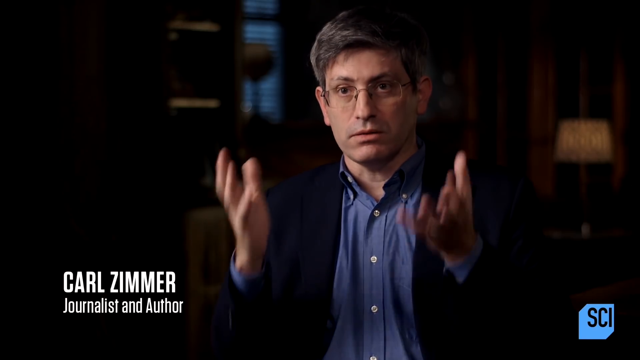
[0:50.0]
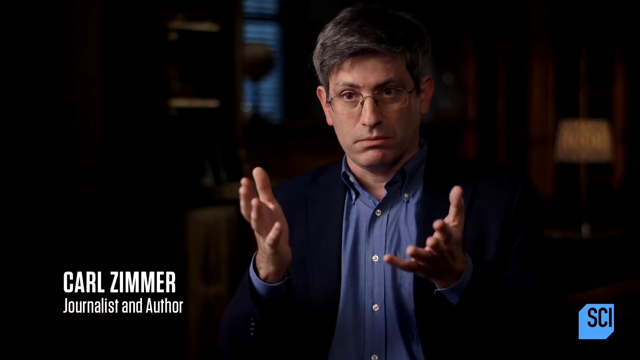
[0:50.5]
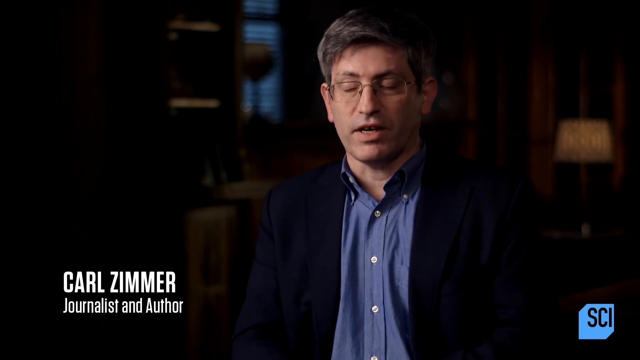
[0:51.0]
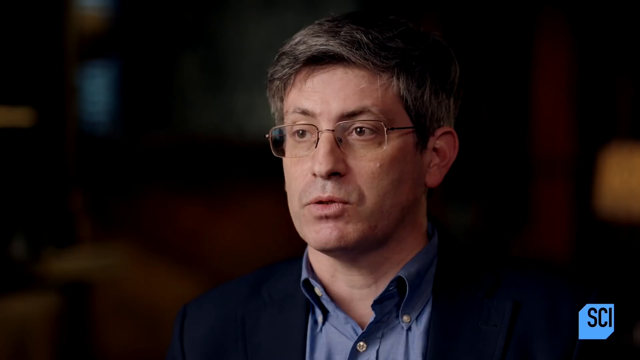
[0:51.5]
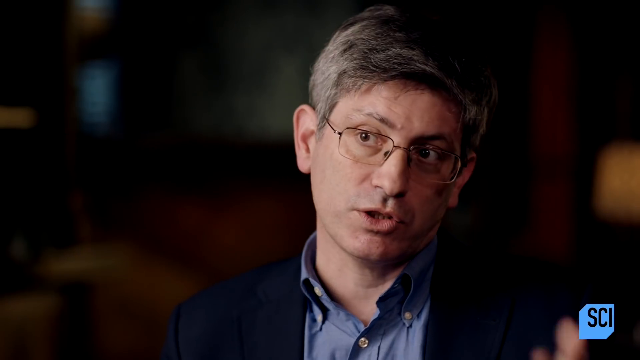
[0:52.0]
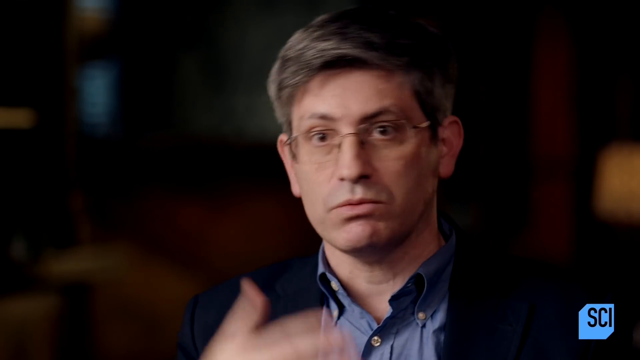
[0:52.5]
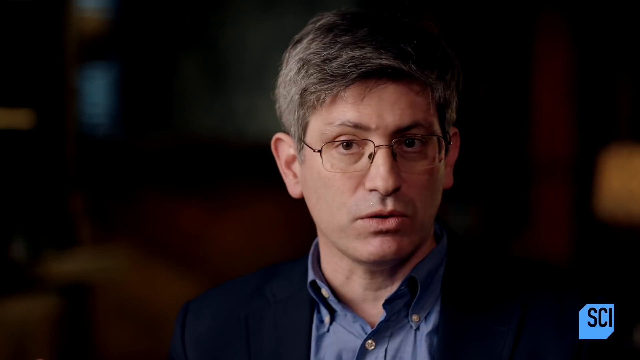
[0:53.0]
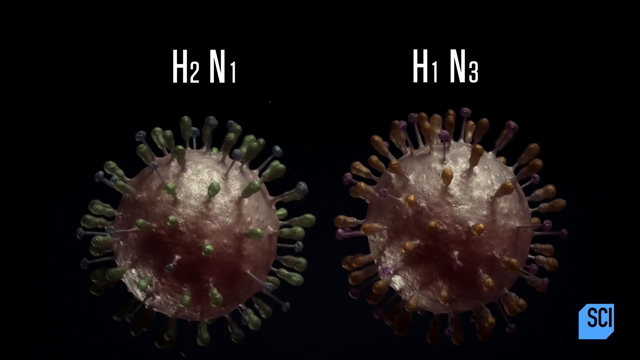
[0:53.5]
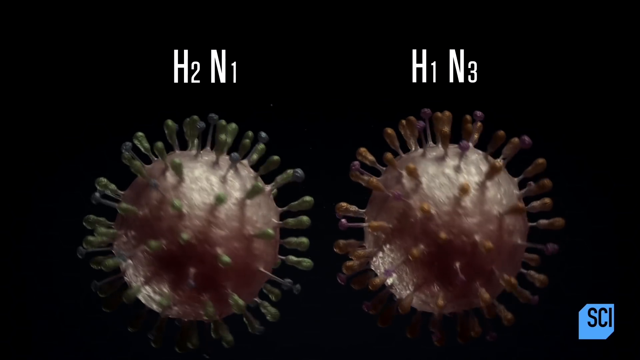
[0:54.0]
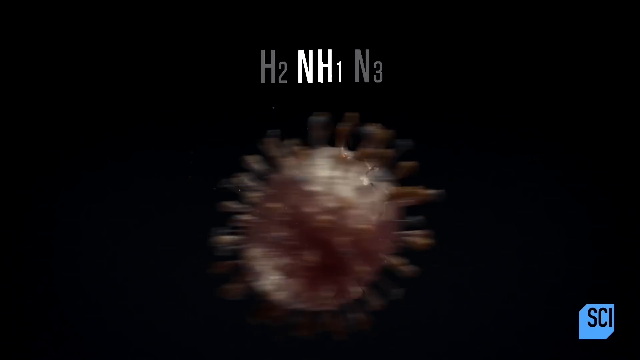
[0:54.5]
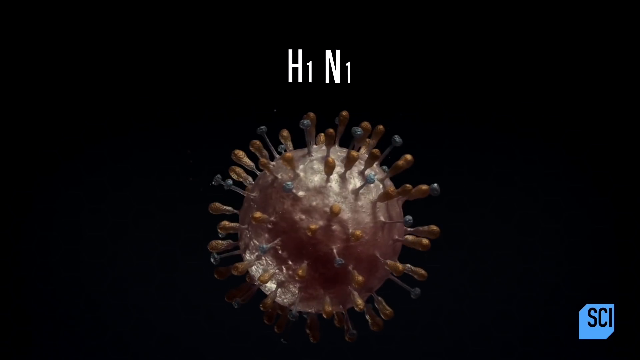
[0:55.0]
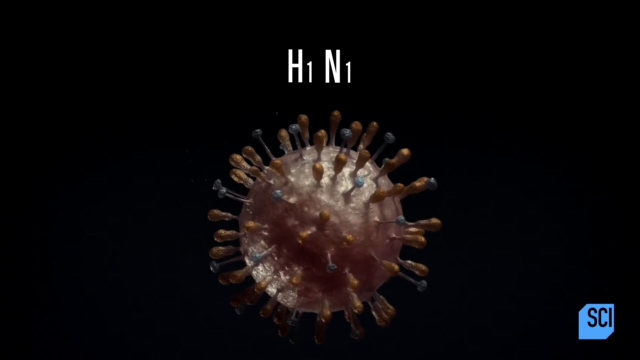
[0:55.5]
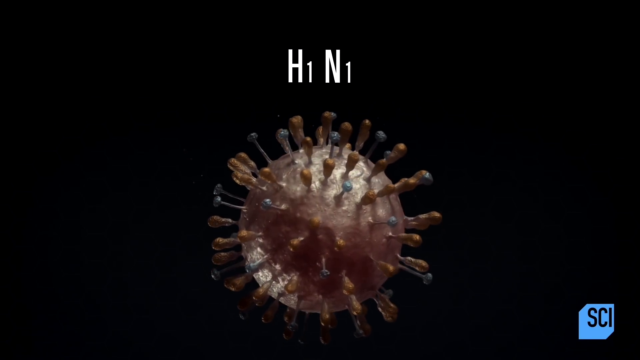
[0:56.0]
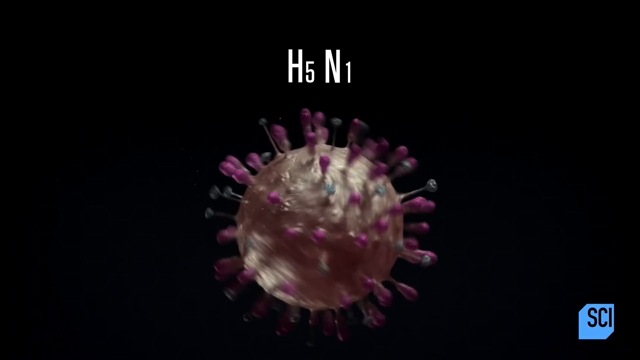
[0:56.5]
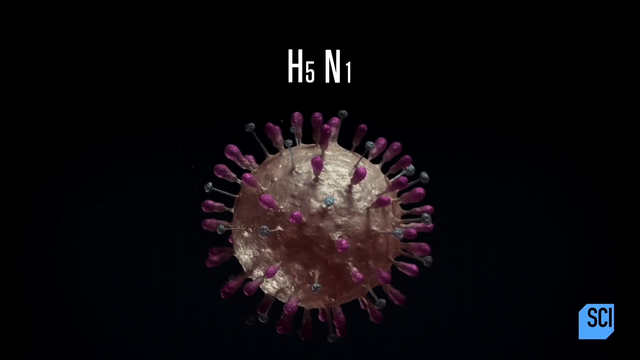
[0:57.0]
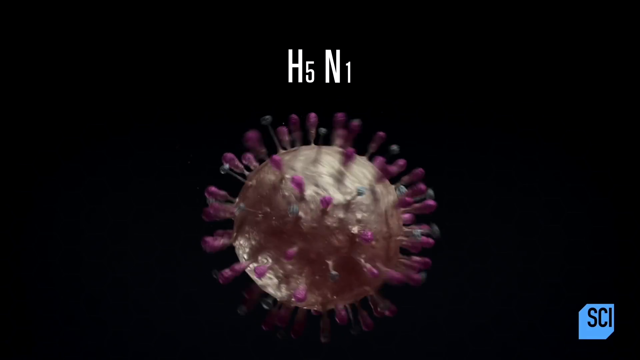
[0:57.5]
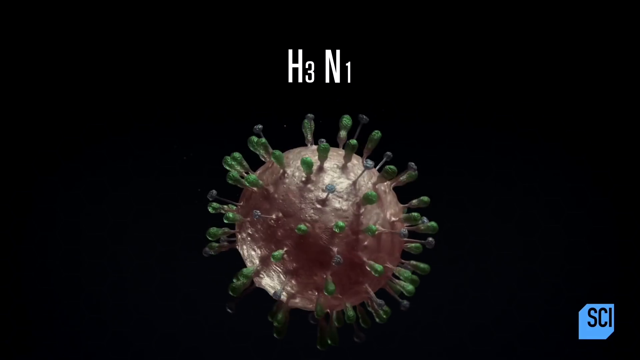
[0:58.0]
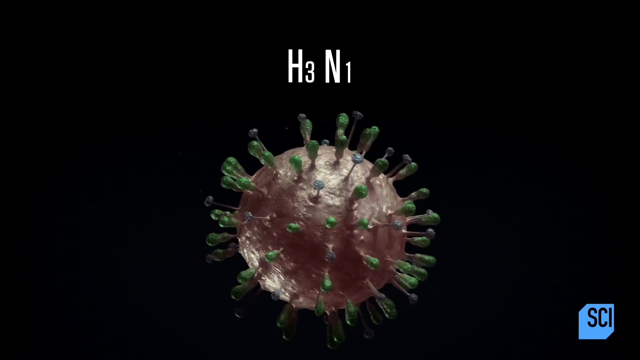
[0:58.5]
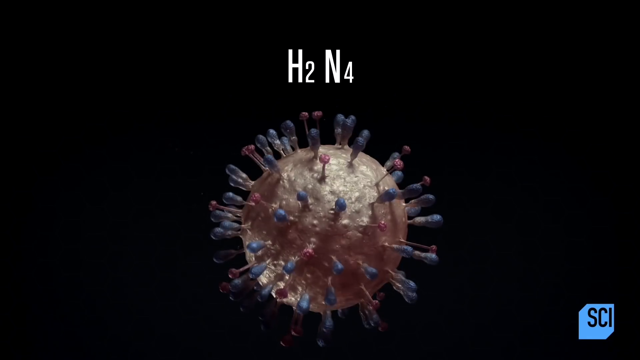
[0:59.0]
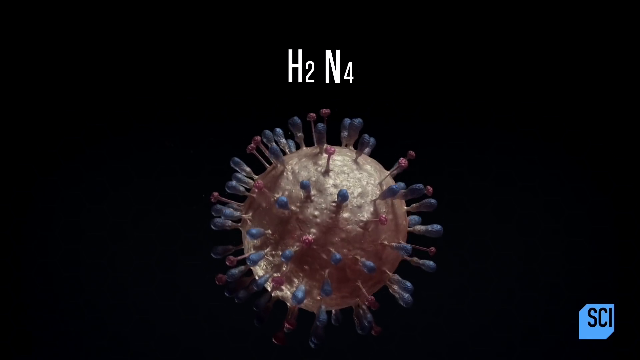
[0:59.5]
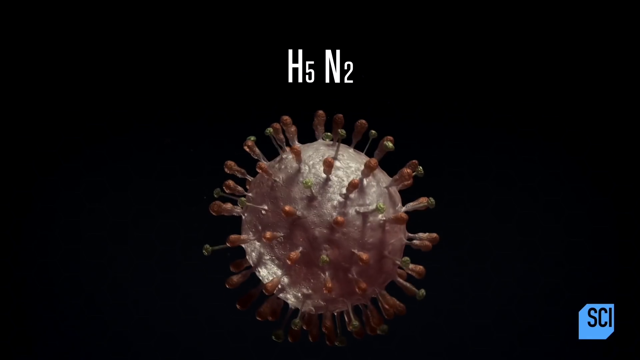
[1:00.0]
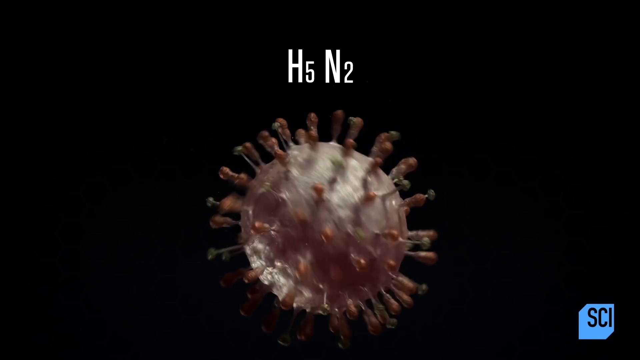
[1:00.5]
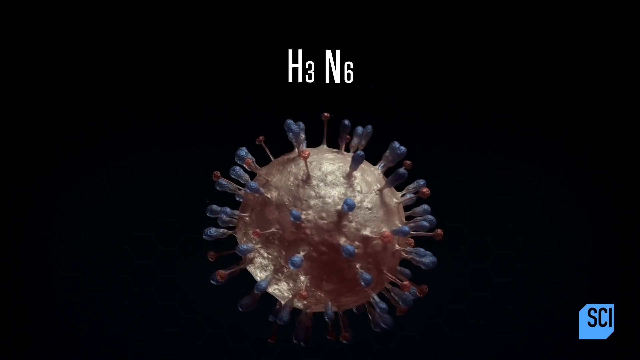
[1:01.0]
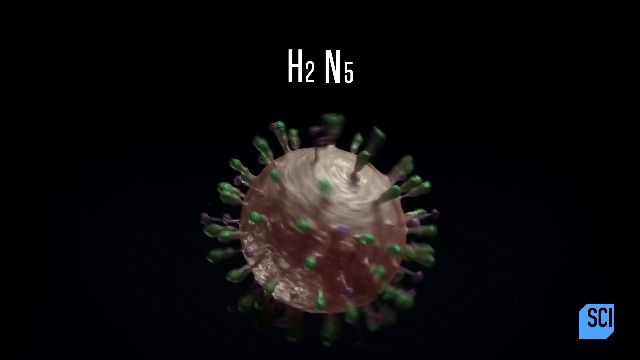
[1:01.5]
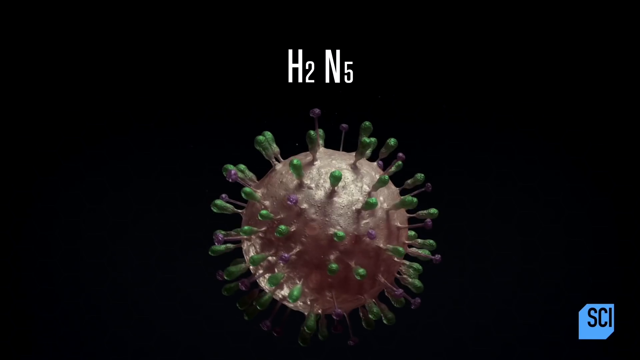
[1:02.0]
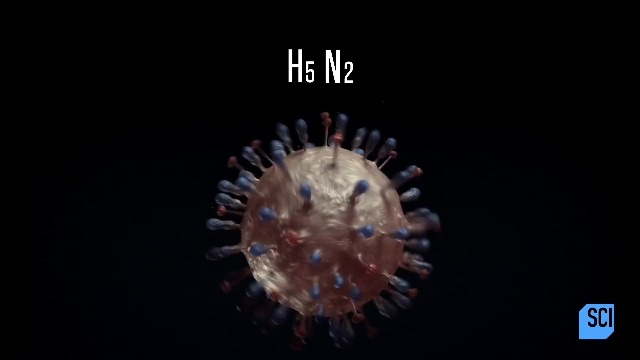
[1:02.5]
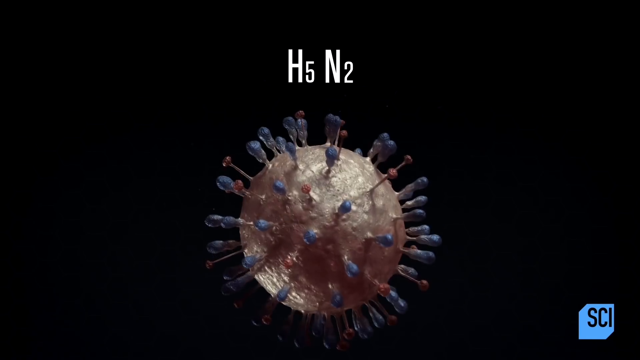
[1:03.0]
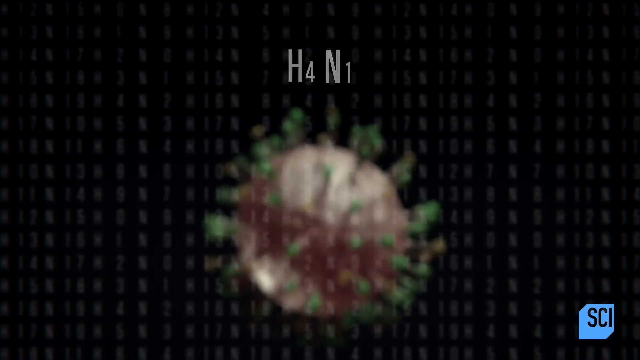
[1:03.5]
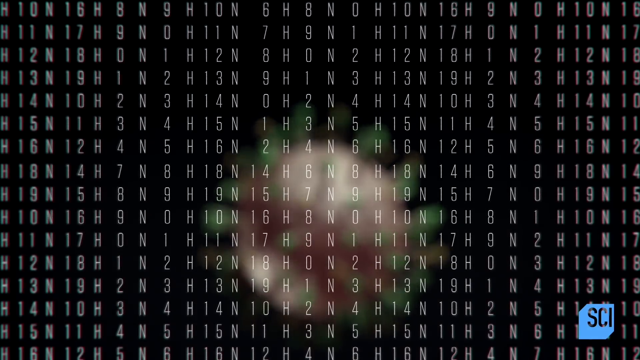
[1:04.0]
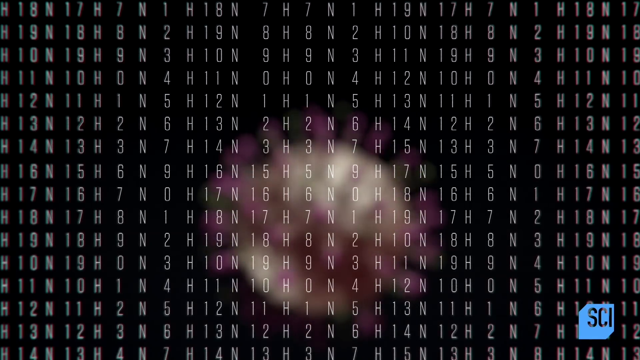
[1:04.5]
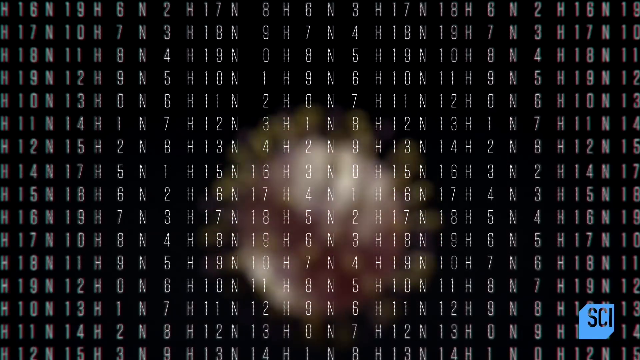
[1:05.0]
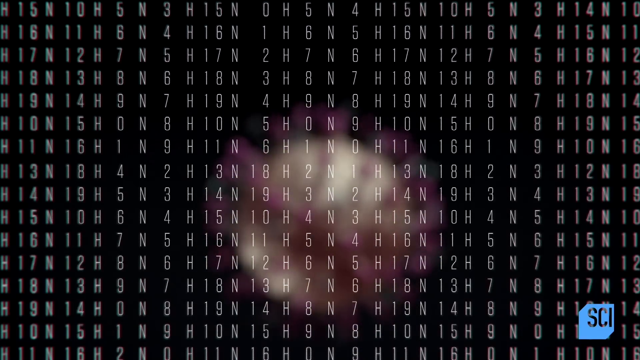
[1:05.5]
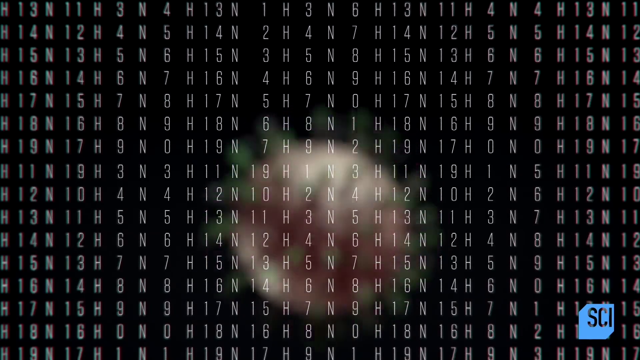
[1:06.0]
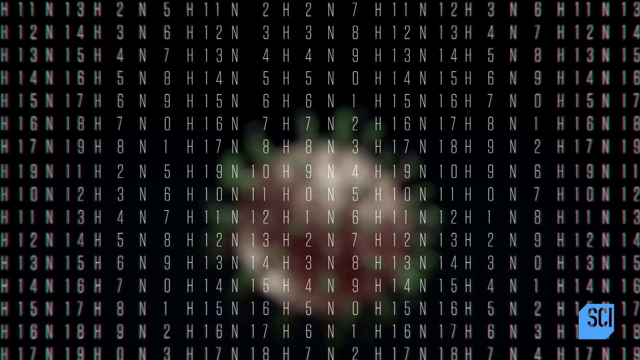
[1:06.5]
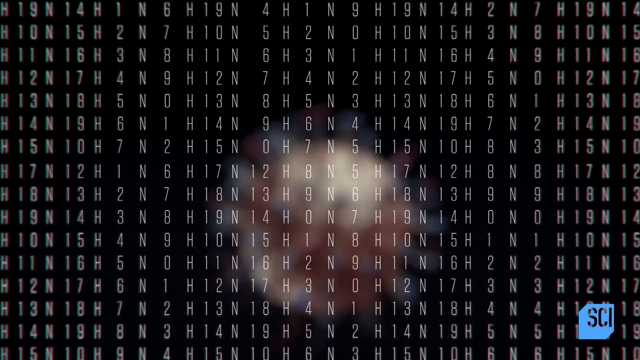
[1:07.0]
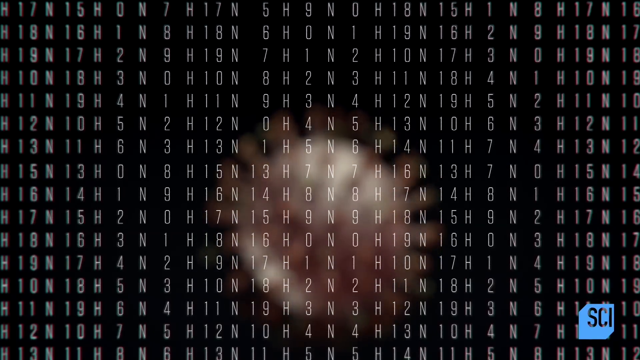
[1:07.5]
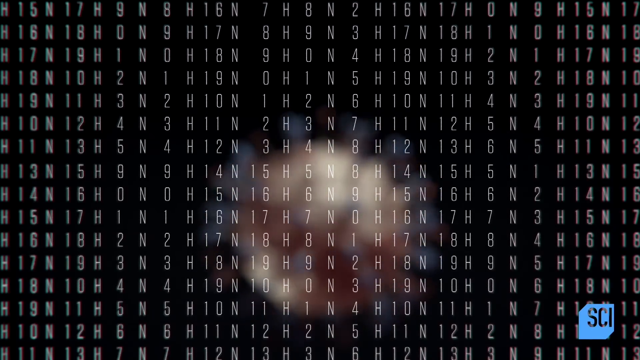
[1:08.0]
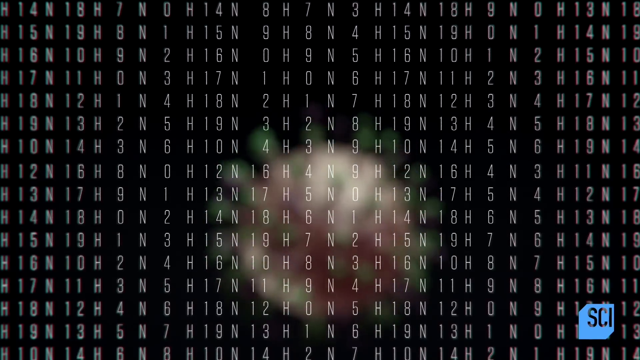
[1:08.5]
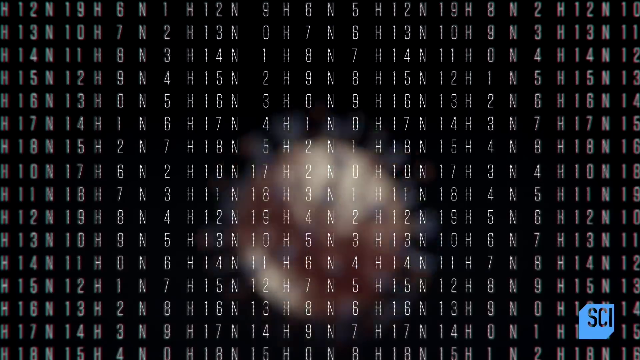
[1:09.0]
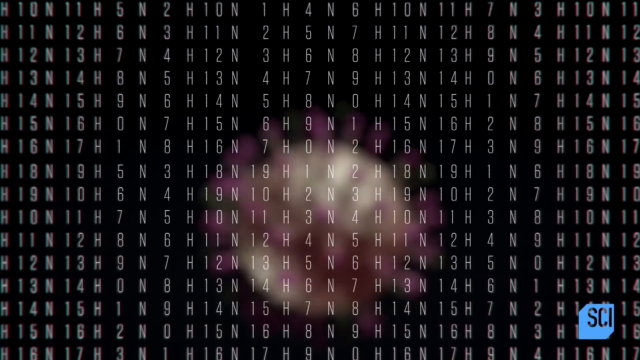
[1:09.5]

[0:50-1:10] A man is shown with printing below him that reads "Carl Zimmer, journalist and author". In the lower right-hand side of the screen are the letters "SCI" in black against a blue background. The man has gray hair, wire-rimmed glasses and dark eyes, and wears a black jacket over a blue shirt that is unbuttoned at the collar. As he speaks to the camera he gesticulates with both hands, at one point raising first his left hand, then his right hand in front of the camera. The image switches to two of the gold, globe-shaped objects with spikes; the one on the left is labeled "H2N1" and the one on the right "H1N3". The two globes then combine into a single globe labeled "H1N1". It rotates for a moment, then the label changes to "H5N1". It rotates again and the label changes to "H3N1", with the spikes now rendered in green above the gold globe. It then changes to "H2N4" with blue spikes, "H5N2" with gold spikes, "H3N6" with blue spikes, "H2N5" with green spikes, "H5N2" with purple spikes, and lastly "H4N1". The screen then shows rows and columns of letters and numbers that look like computer binary code, moving up and down the screen vertically.